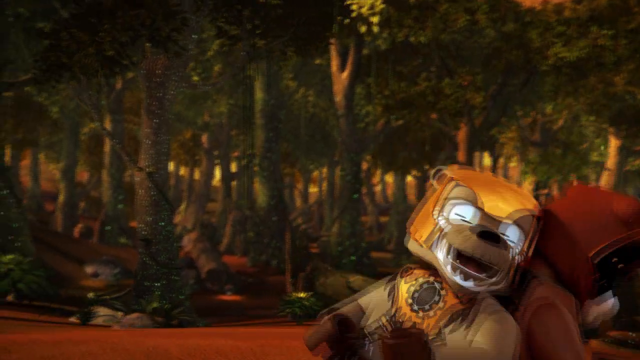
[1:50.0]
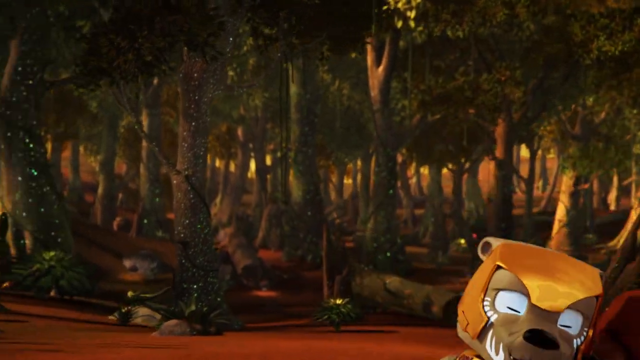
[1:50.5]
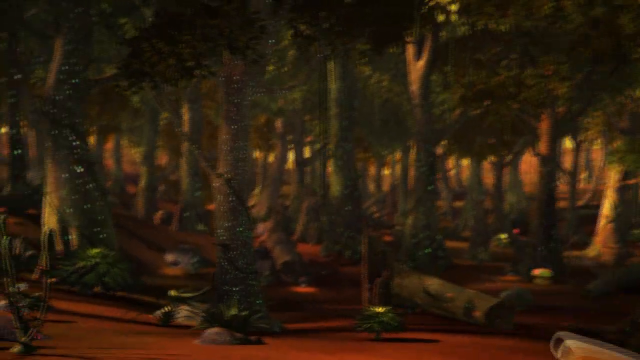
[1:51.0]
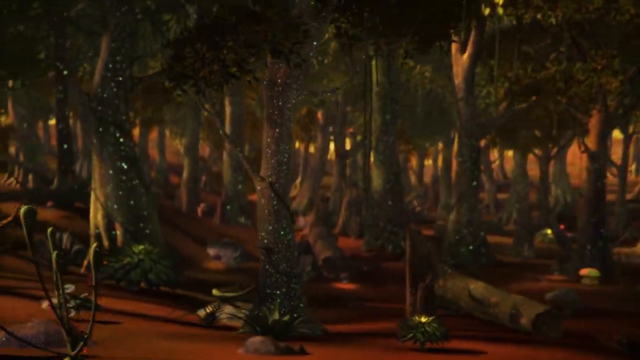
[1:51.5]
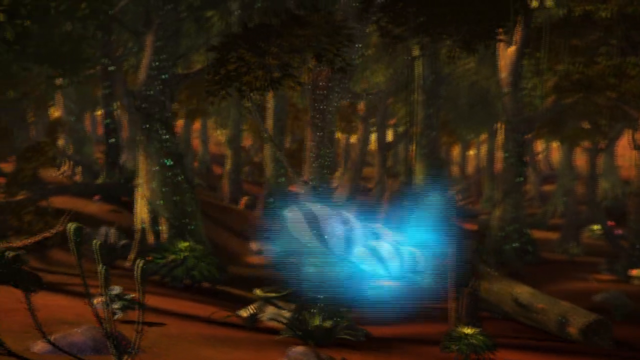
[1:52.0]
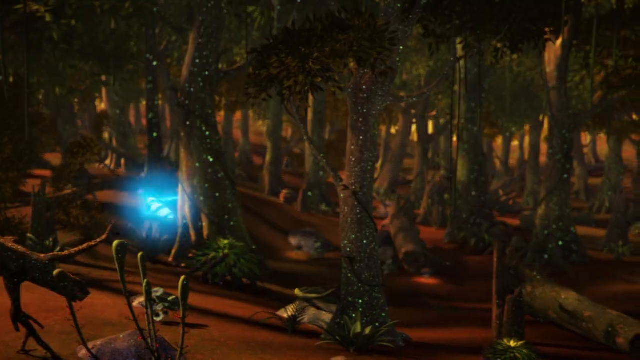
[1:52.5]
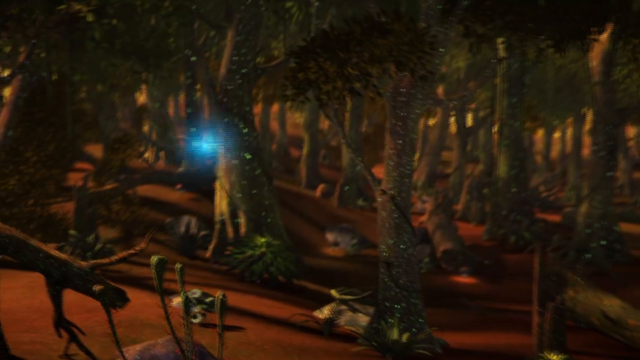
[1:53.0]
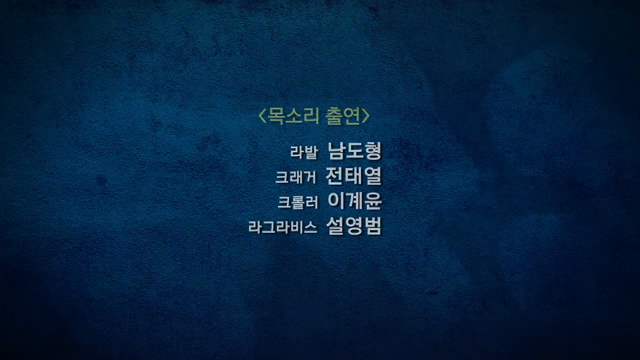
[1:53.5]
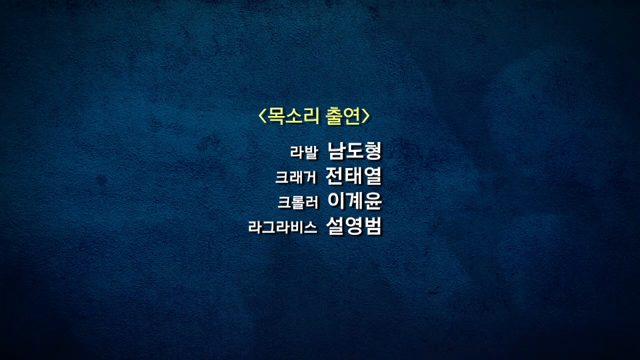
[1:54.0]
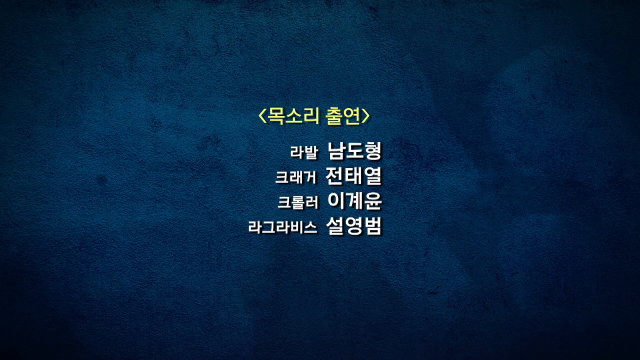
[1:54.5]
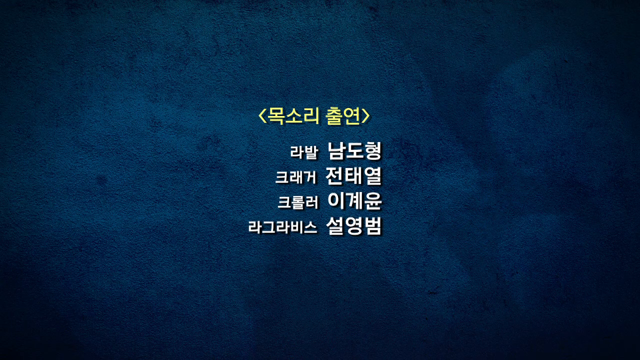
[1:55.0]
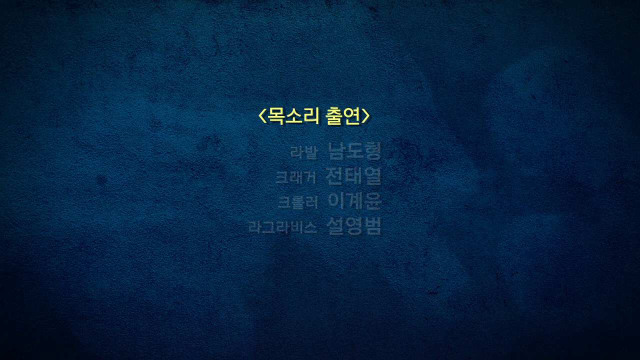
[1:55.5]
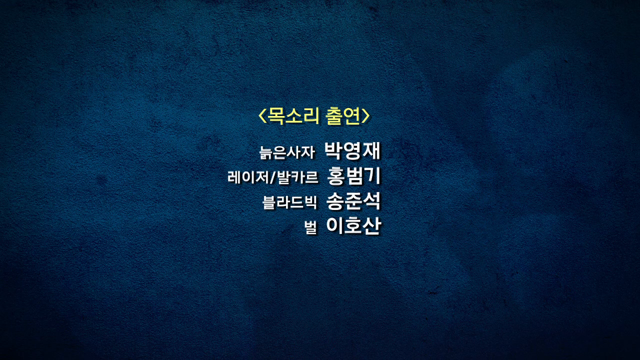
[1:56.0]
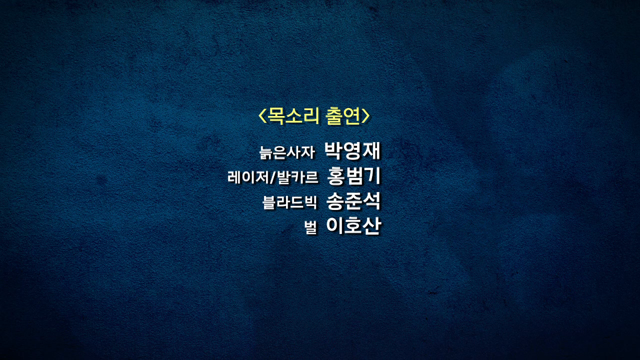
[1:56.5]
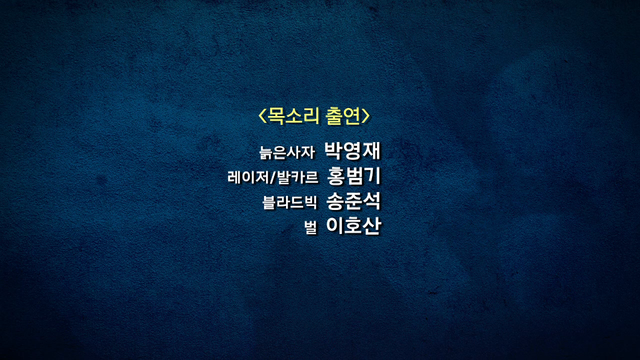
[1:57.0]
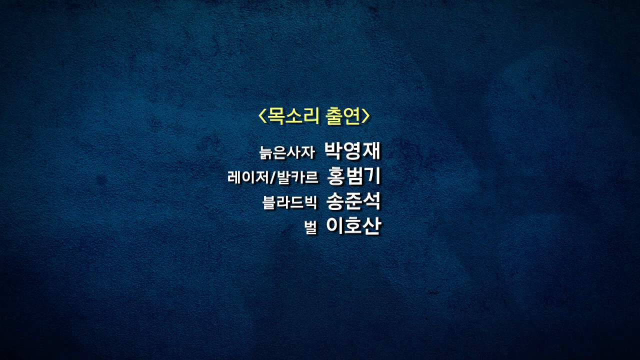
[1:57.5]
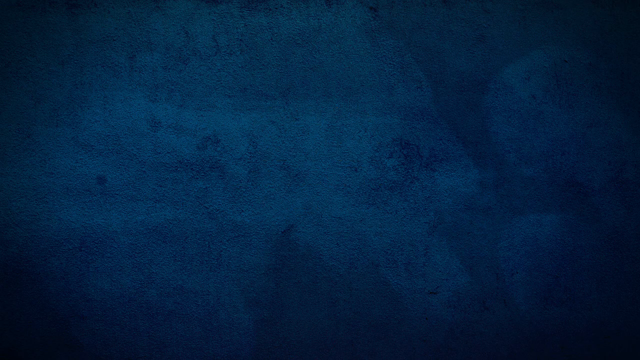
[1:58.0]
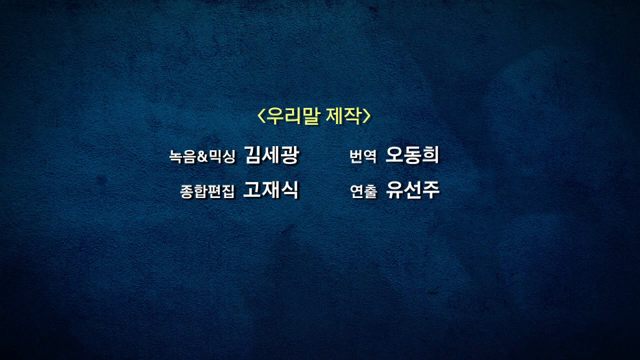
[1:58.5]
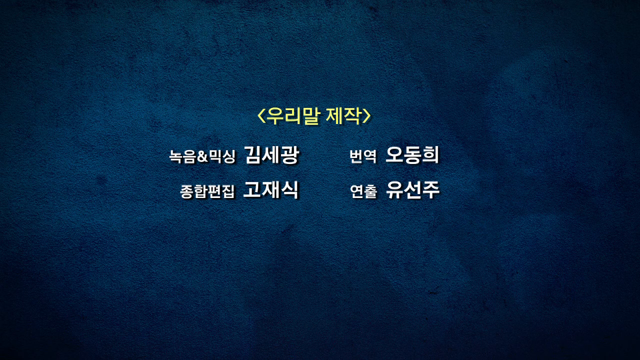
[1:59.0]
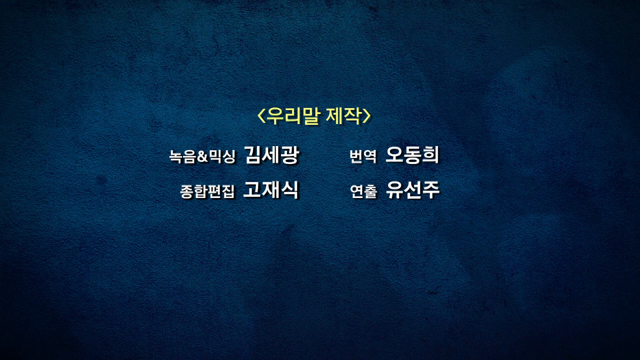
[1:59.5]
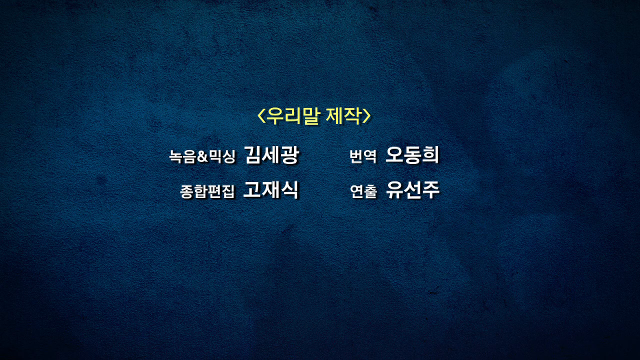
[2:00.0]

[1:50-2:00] A blue fairy-like animated object flies through the forest where the bears were, and the two bears are shown sitting on the forest floor, leaning against each other with their eyes closed as if sleeping. The animation then seems to end, and credits roll against a blue background. The writing is in Korean, with a yellow subtitle at the top and two columns of Korean characters below, listing each role with the name to its right. At least four different frames show the names of the people and their roles in creating the animated series.